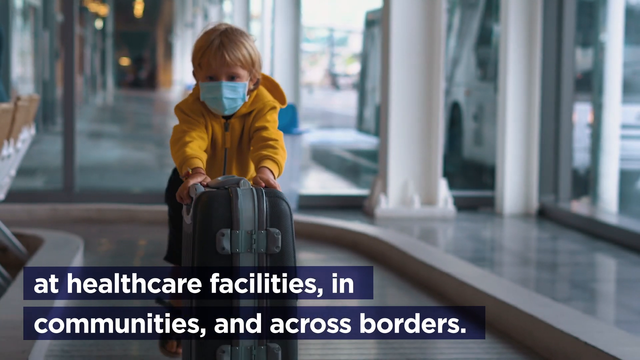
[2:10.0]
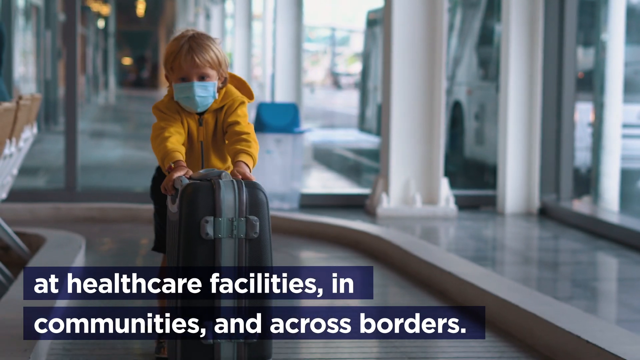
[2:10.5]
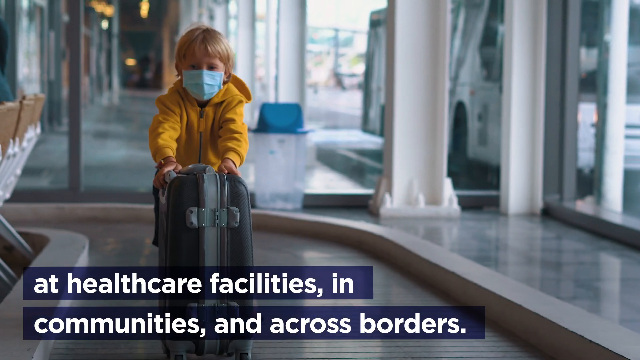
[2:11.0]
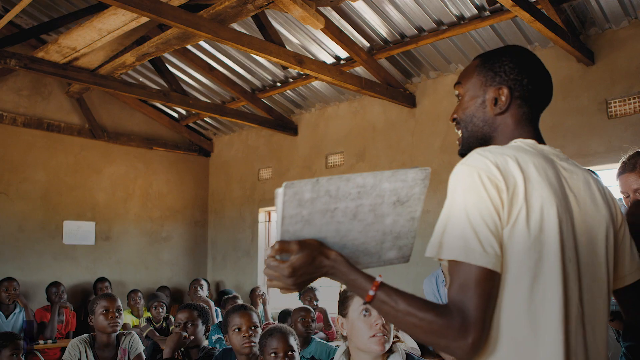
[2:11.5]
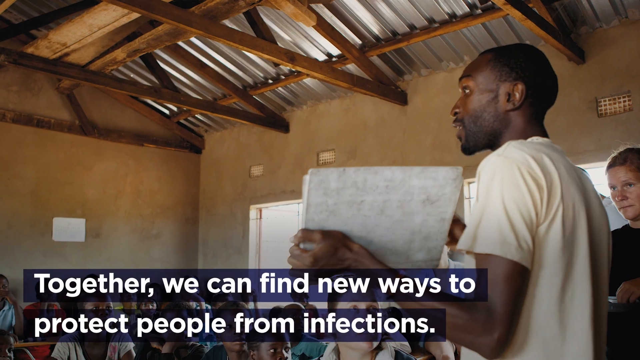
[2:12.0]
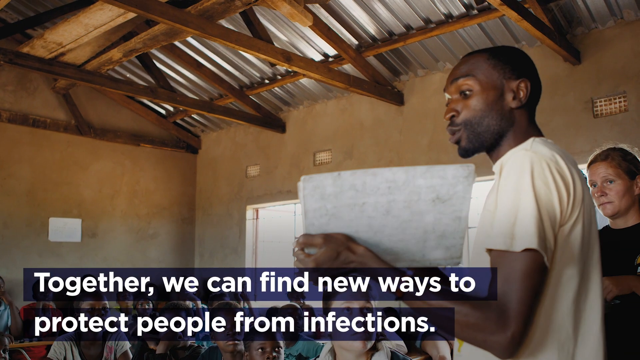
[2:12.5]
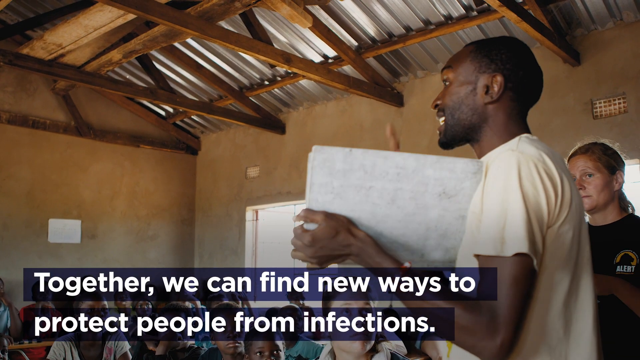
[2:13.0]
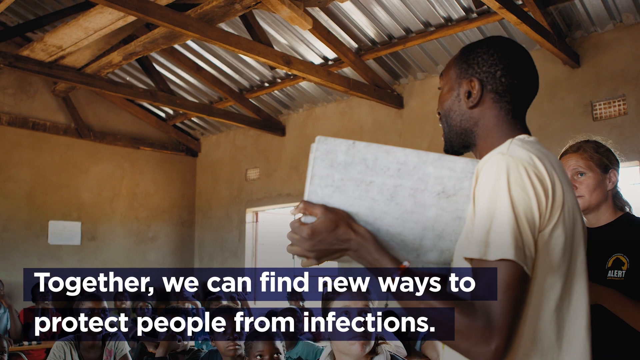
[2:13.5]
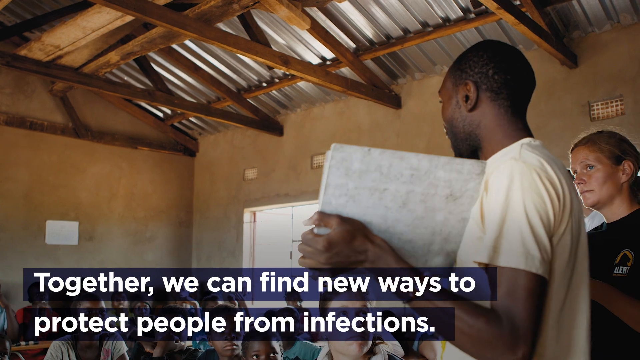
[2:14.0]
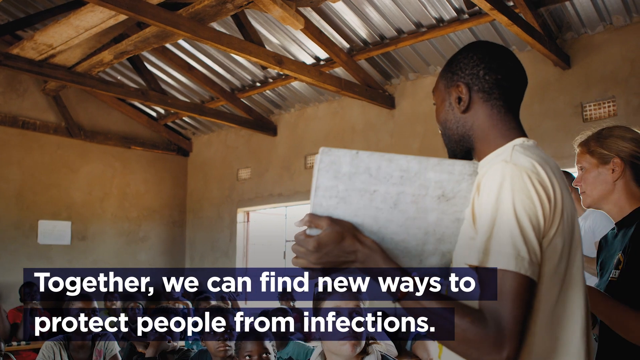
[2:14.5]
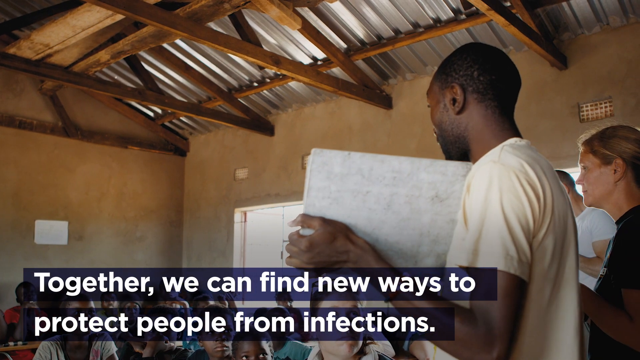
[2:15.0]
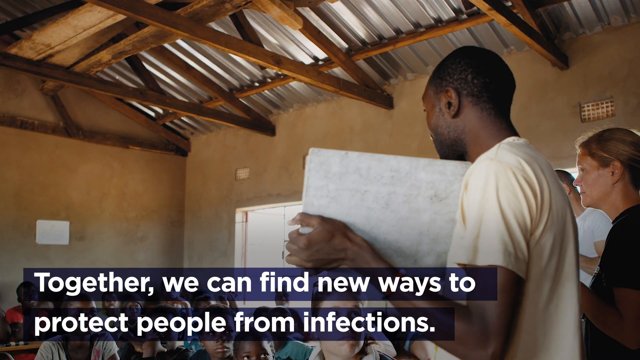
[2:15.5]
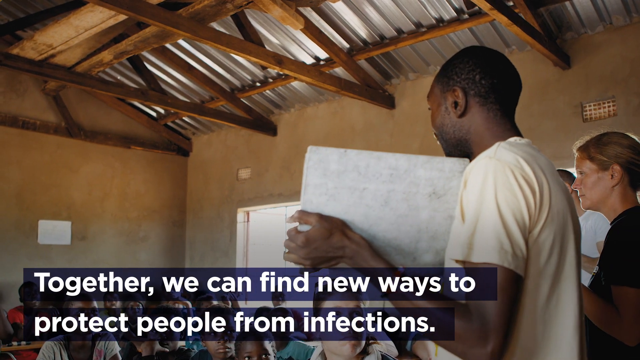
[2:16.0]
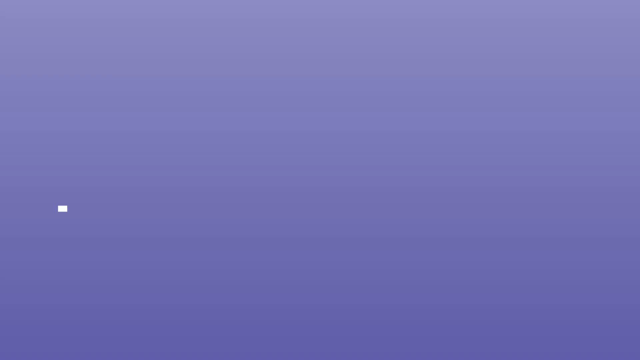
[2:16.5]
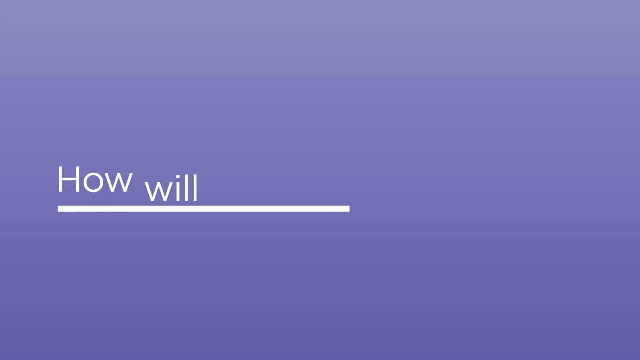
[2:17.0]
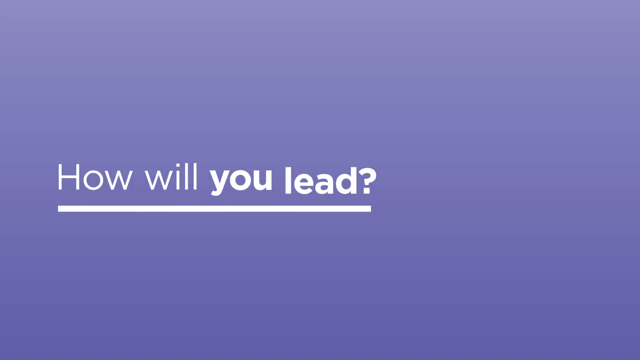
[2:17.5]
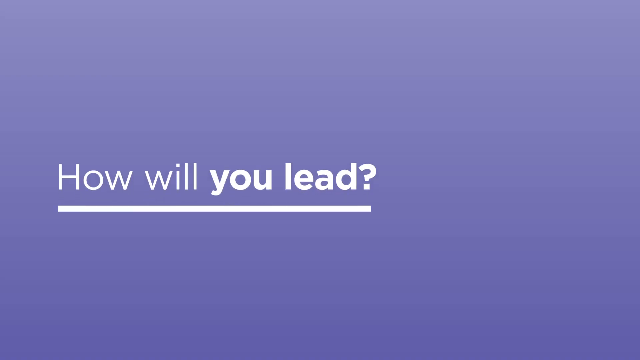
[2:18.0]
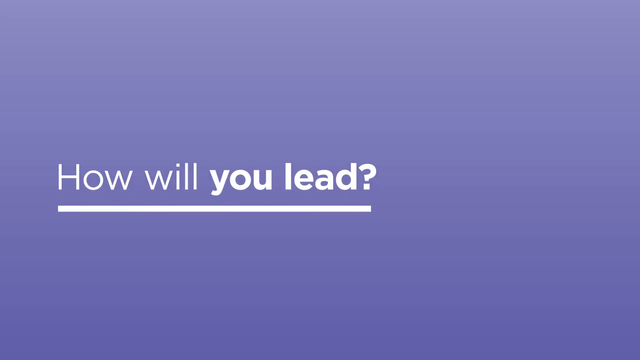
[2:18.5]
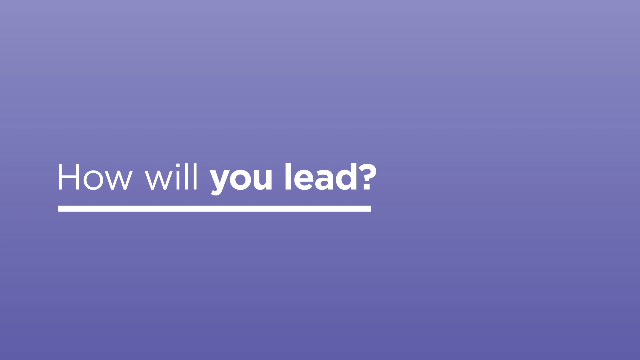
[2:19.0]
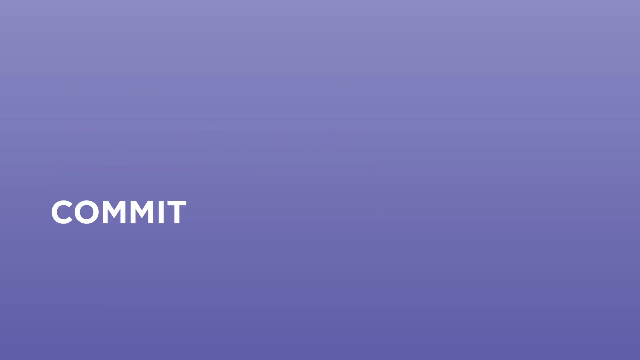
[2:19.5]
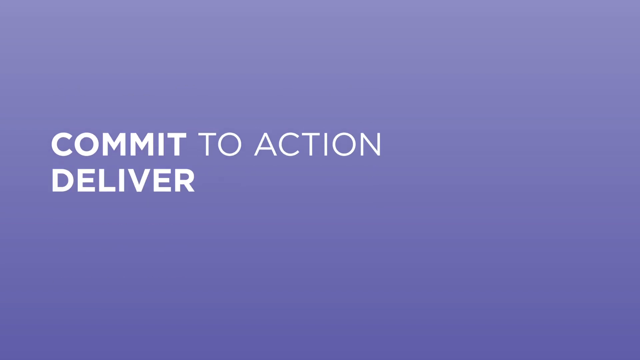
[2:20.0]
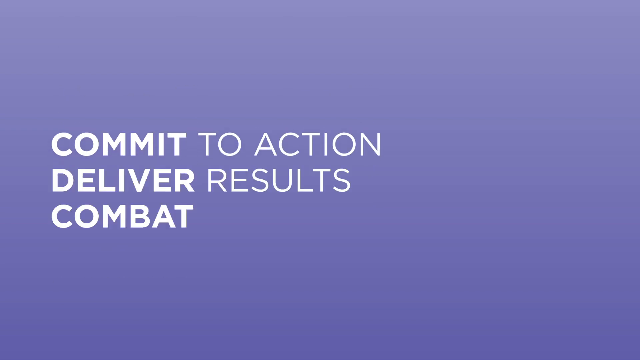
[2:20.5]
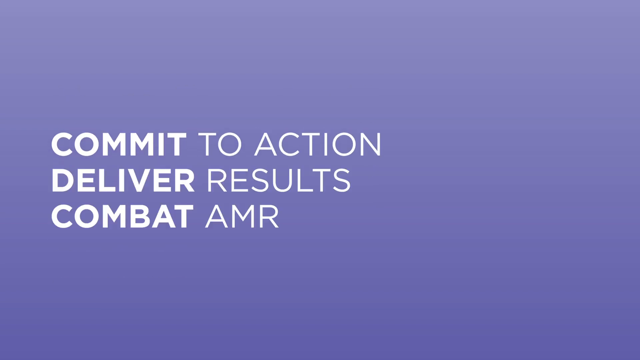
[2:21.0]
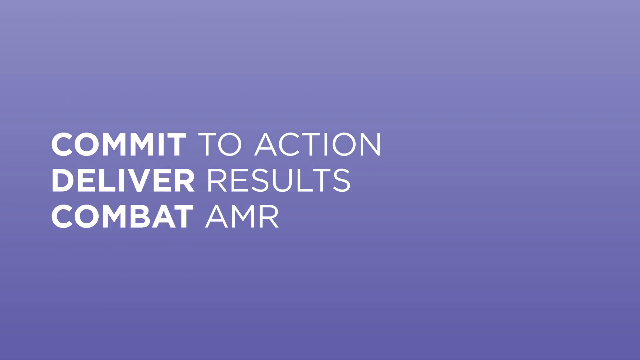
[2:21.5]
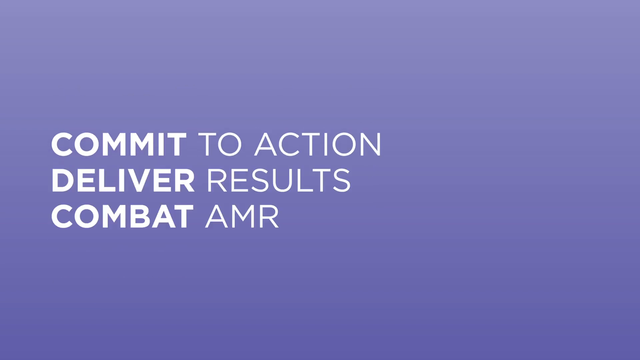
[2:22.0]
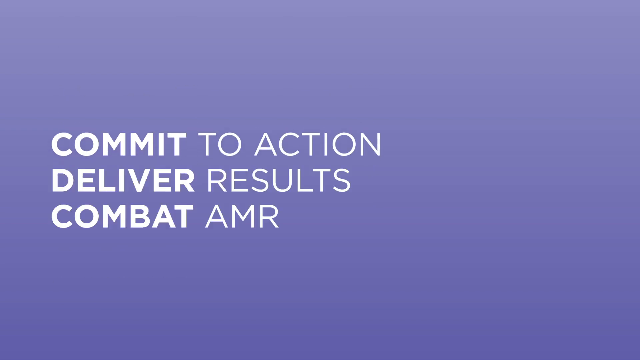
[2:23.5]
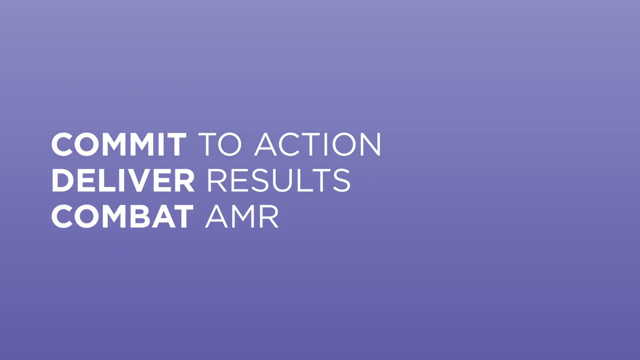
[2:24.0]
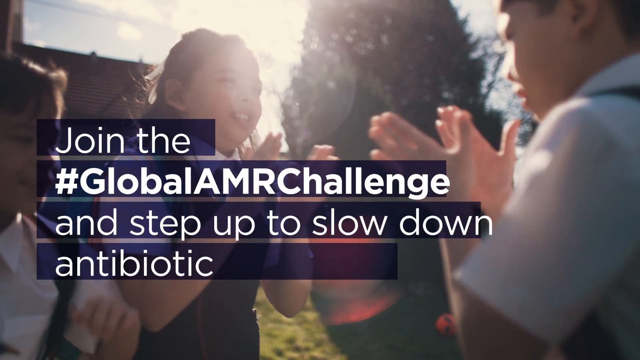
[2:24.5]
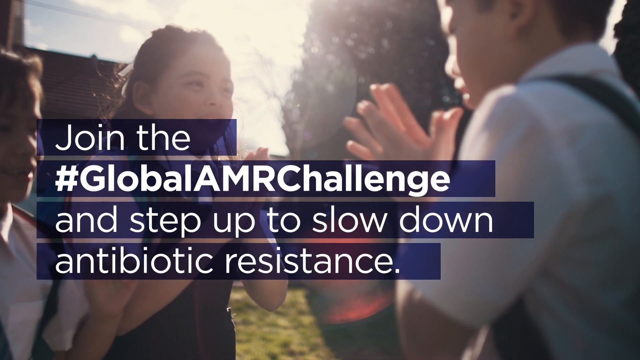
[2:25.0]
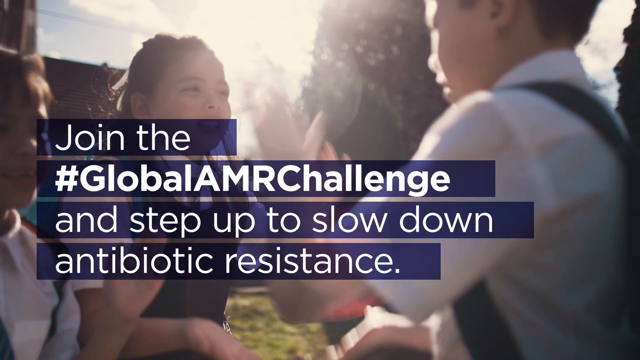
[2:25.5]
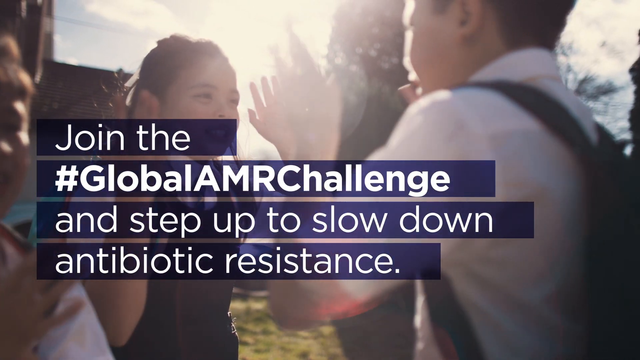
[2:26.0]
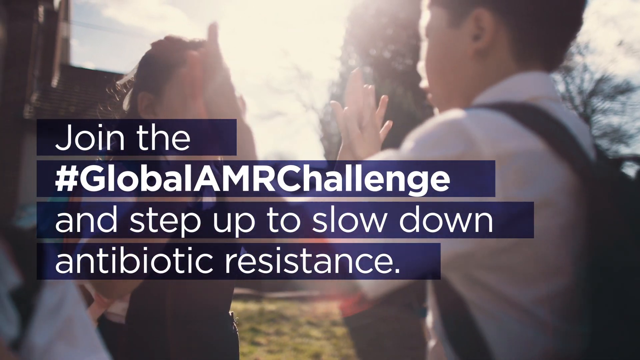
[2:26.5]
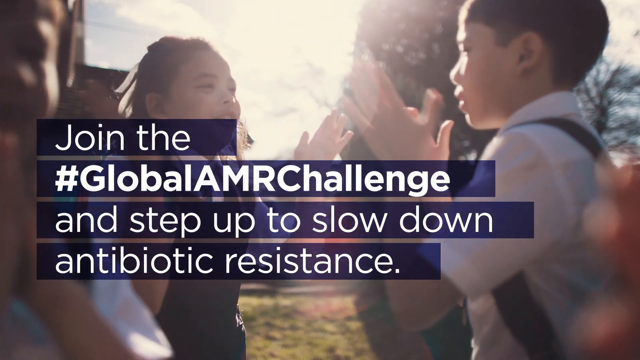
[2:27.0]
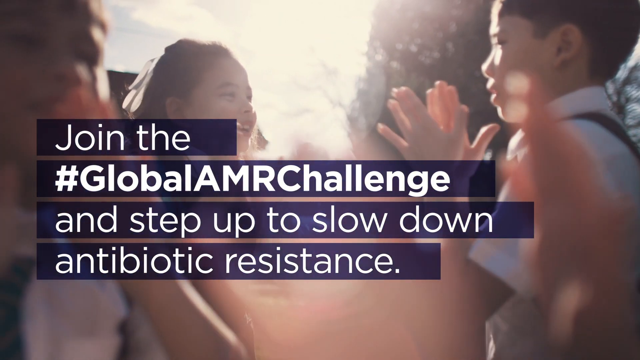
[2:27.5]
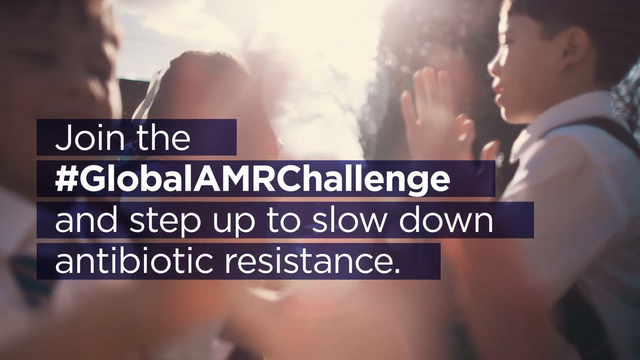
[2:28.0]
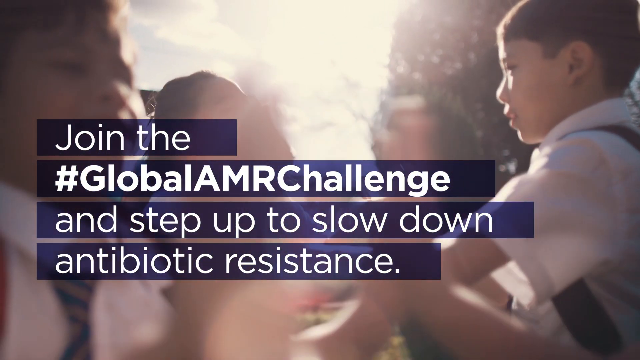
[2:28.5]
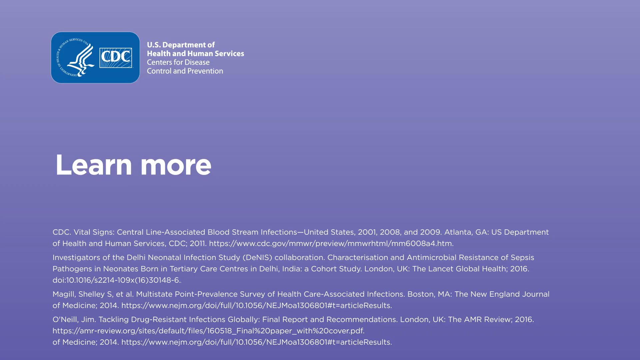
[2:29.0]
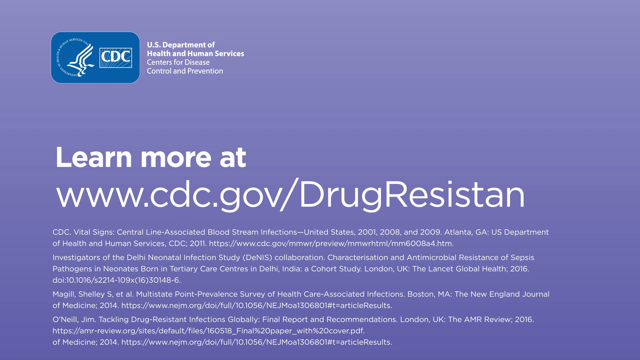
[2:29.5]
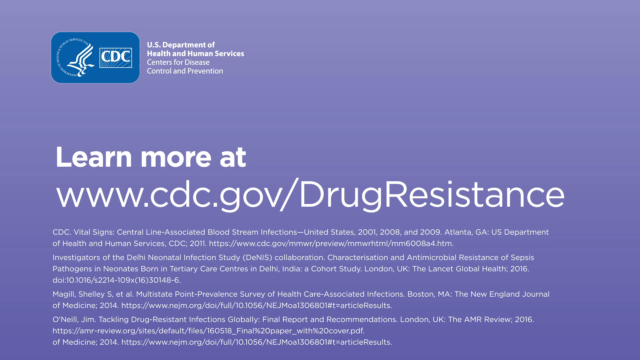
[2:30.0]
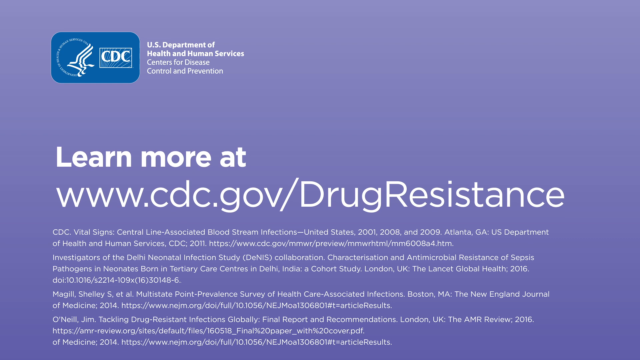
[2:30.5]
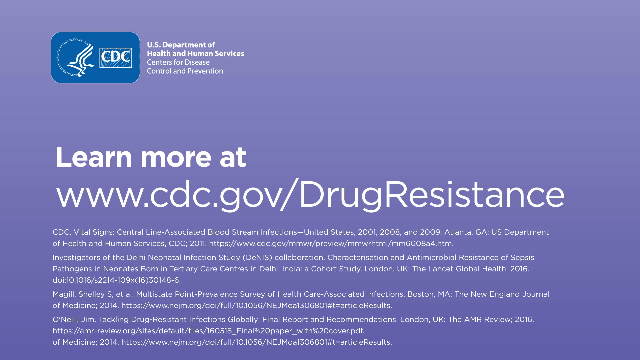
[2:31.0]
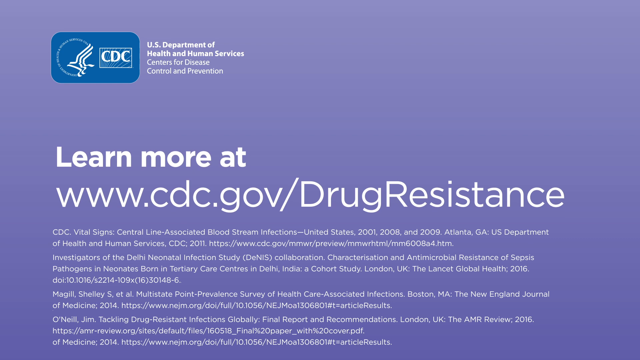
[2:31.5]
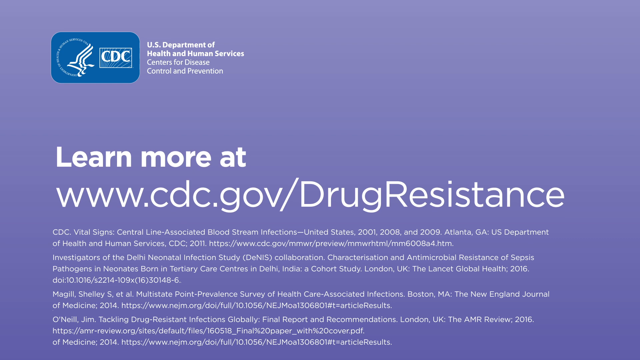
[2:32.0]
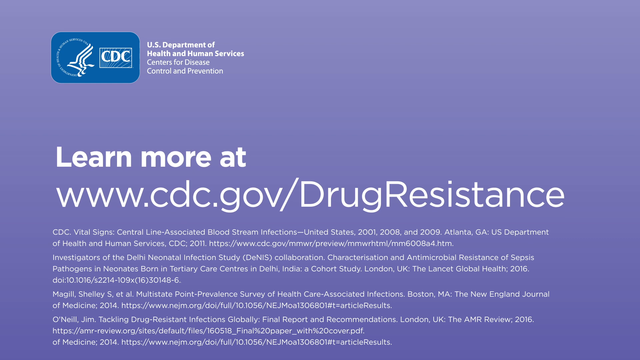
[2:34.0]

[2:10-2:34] An all-tan room has rafters showing on the roof. A black man holds a white piece of paper and looks like he is talking to people who are not visible; only someone standing behind him can be seen. White letters at the bottom of the screen read "together we can find new ways to protect people from infections." Next, on a grayish-blue background, white words with a white line underneath them in the middle read "how will you lead." Those words disappear and are replaced by "commit to actions, deliver results, combat, AMR." Two Japanese or Chinese children appear in uniforms, maybe navy blue with white shirts, that look like little dresses with straps. The screen reads "join the global AMRC challenge. Step up and slow down antibiotic resistance." as the children play a hand game. The blue screen appears again showing the CDC and the words "learn more," with a paragraph in tiny white letters below. Then "www.cdc.gov/DrugResistance" pops up on the screen.